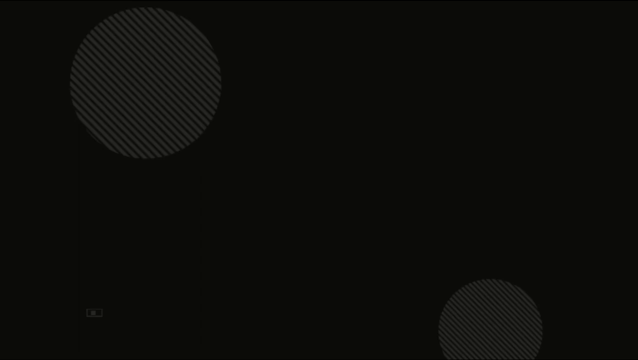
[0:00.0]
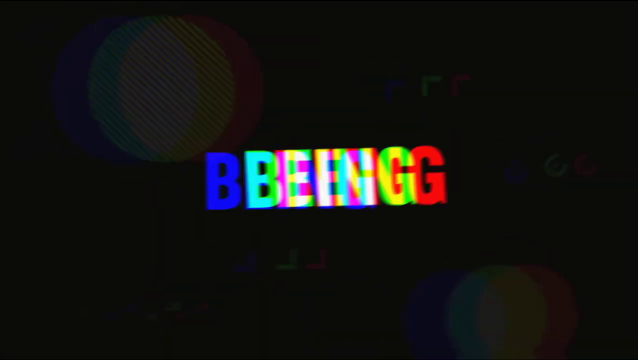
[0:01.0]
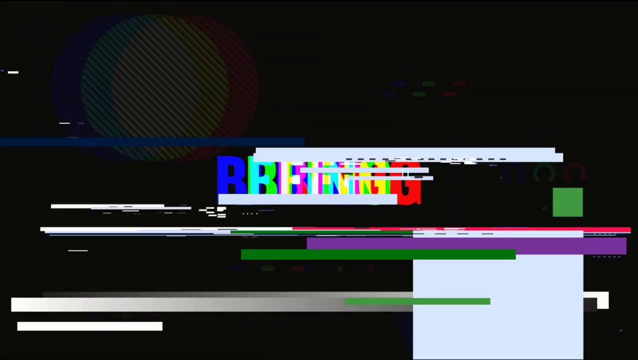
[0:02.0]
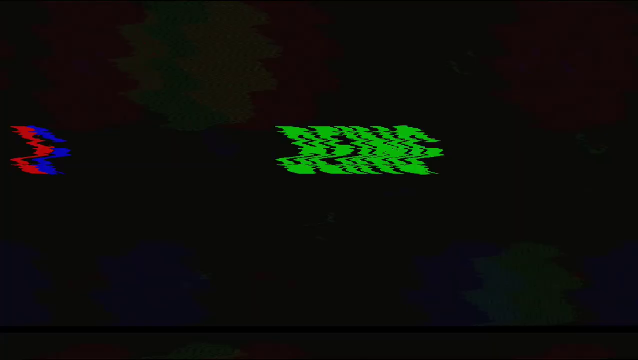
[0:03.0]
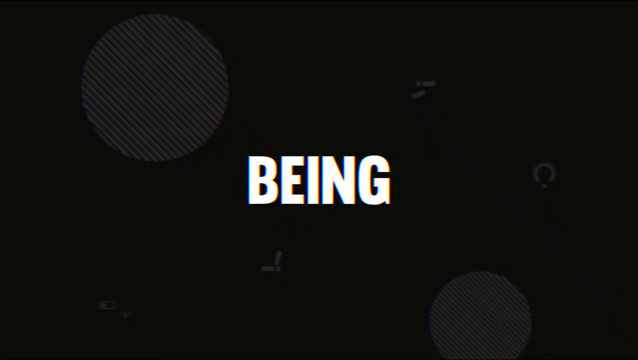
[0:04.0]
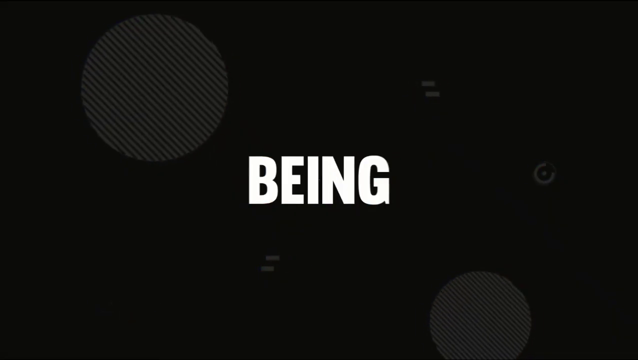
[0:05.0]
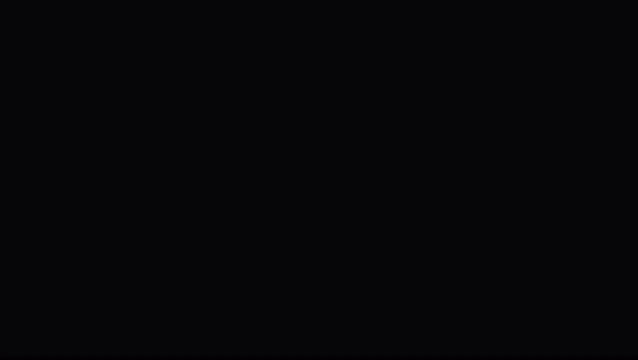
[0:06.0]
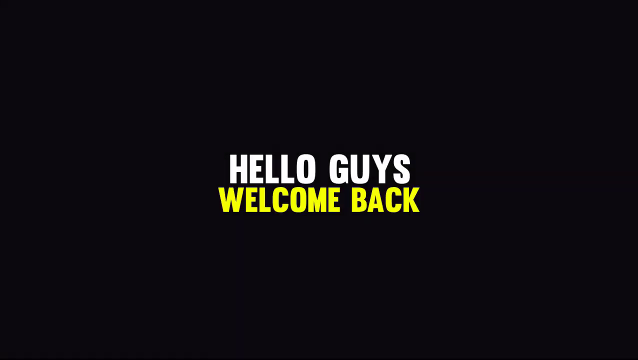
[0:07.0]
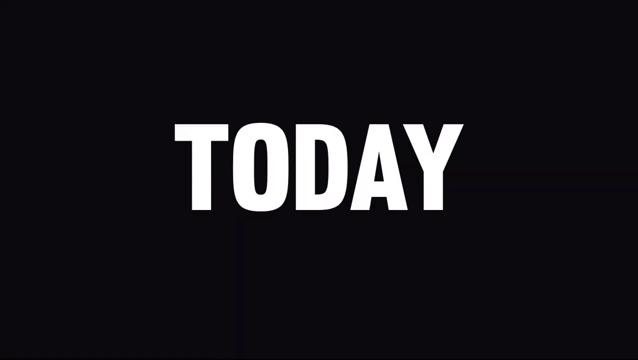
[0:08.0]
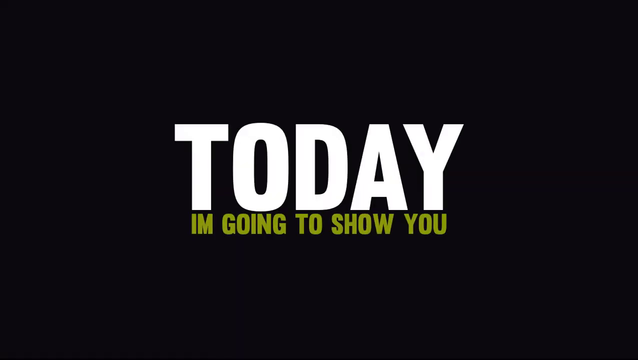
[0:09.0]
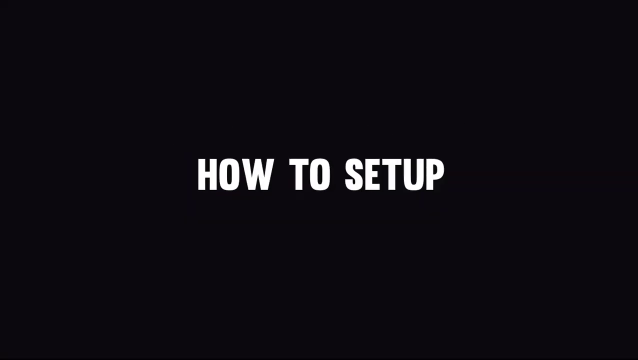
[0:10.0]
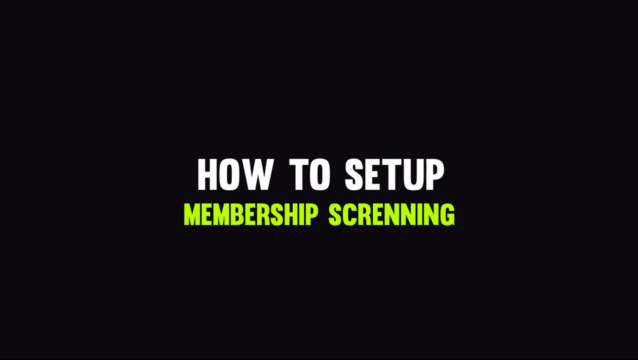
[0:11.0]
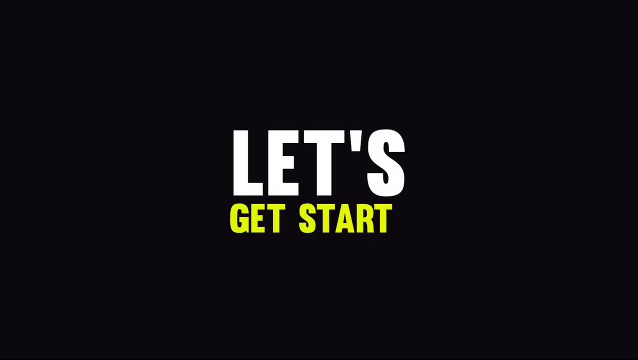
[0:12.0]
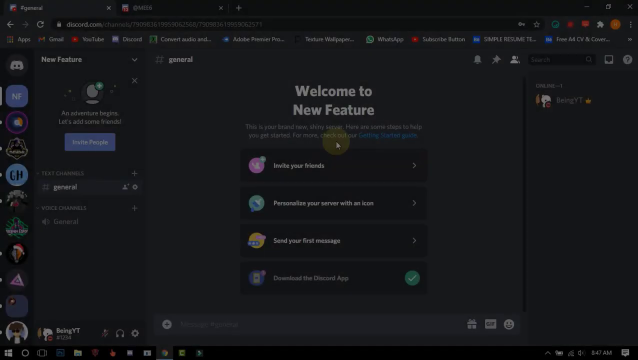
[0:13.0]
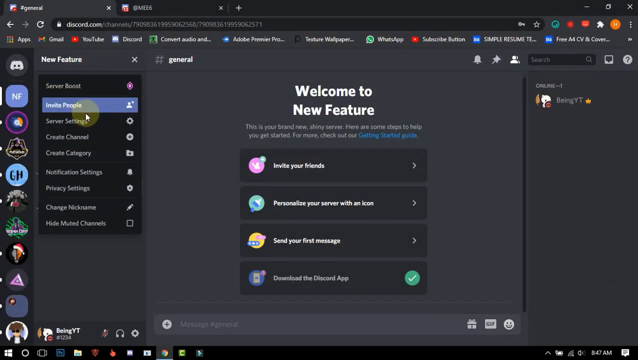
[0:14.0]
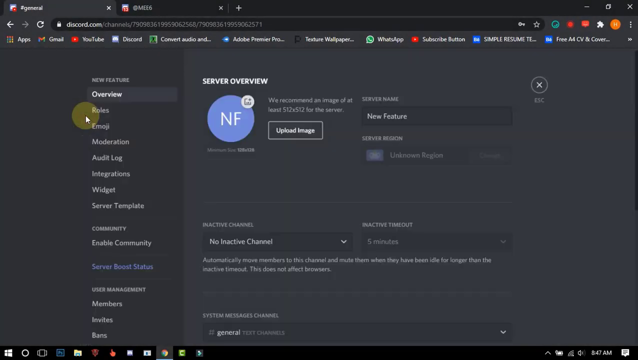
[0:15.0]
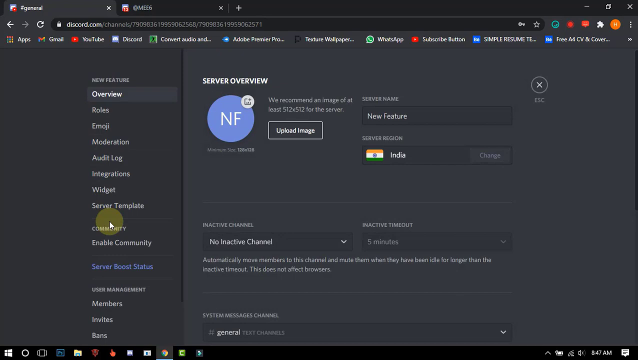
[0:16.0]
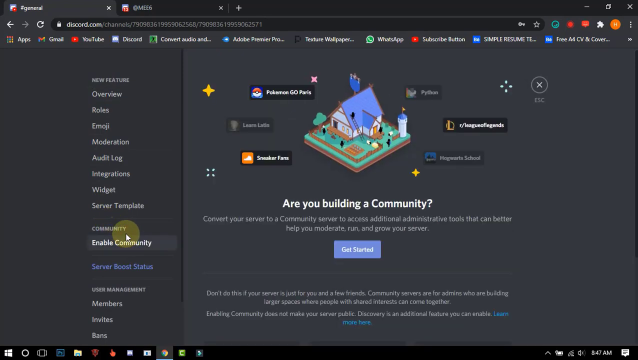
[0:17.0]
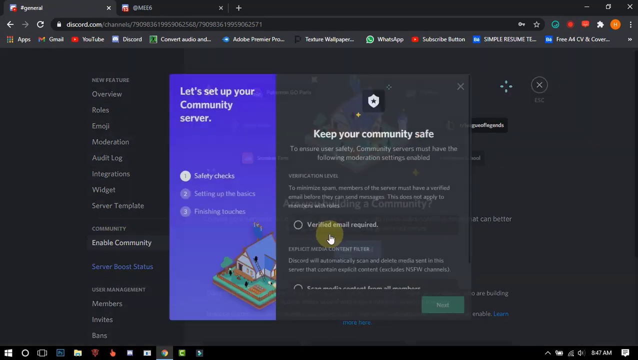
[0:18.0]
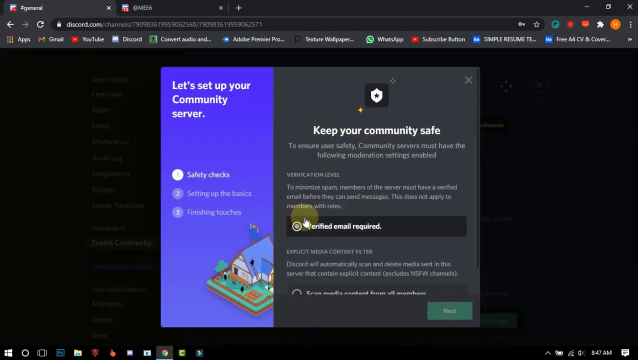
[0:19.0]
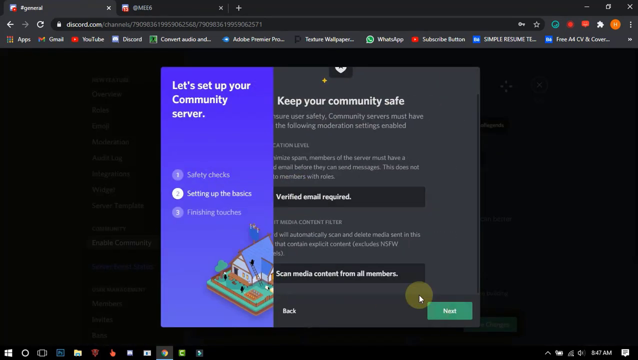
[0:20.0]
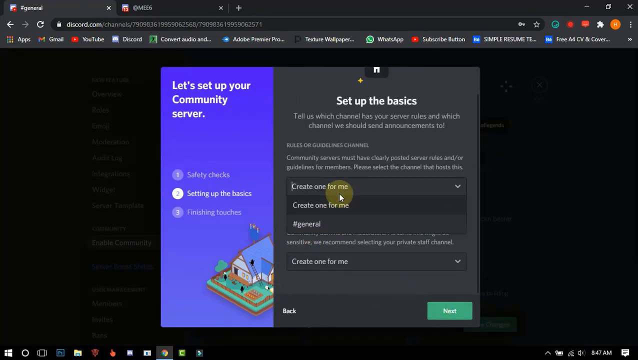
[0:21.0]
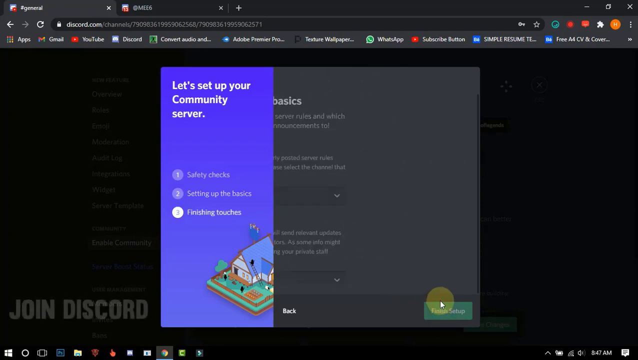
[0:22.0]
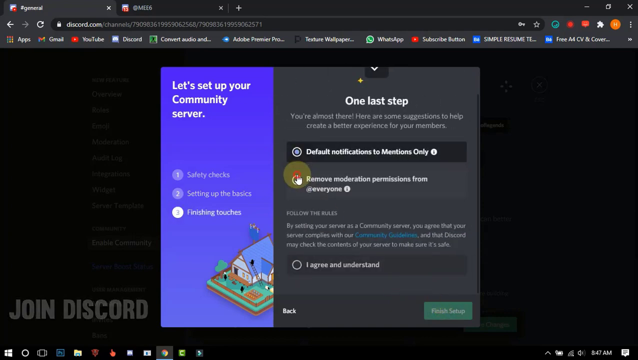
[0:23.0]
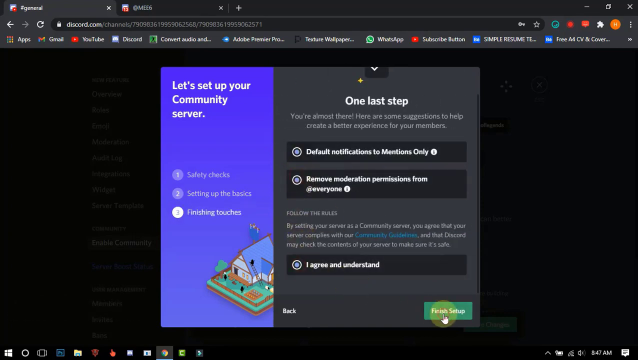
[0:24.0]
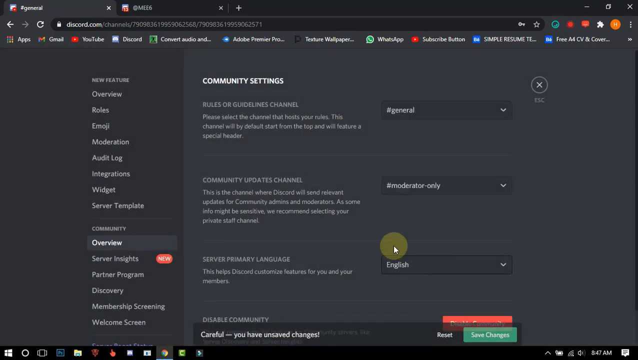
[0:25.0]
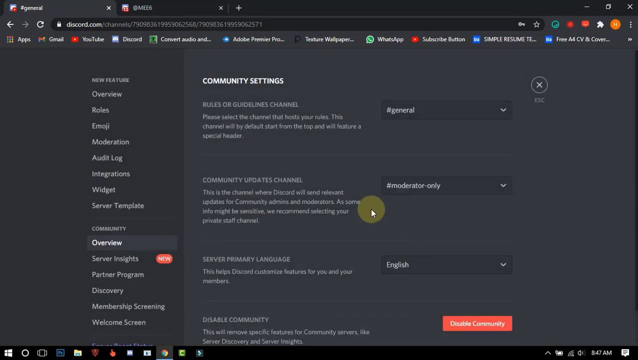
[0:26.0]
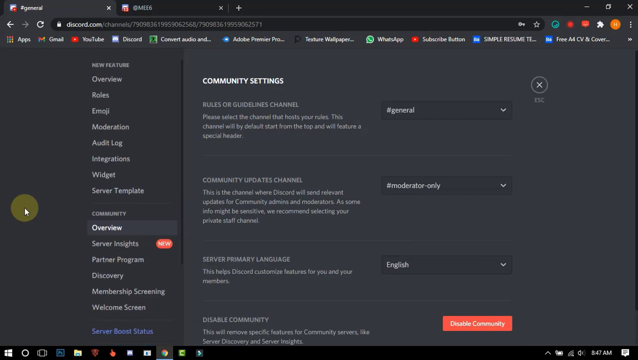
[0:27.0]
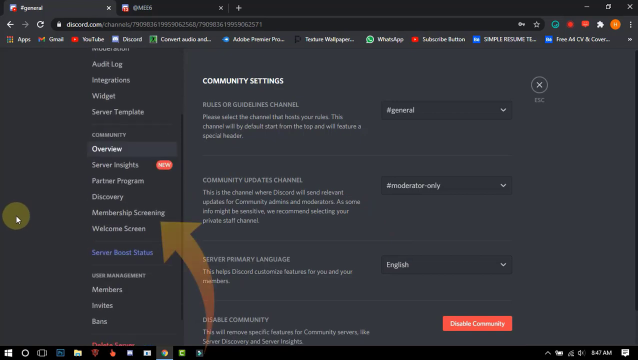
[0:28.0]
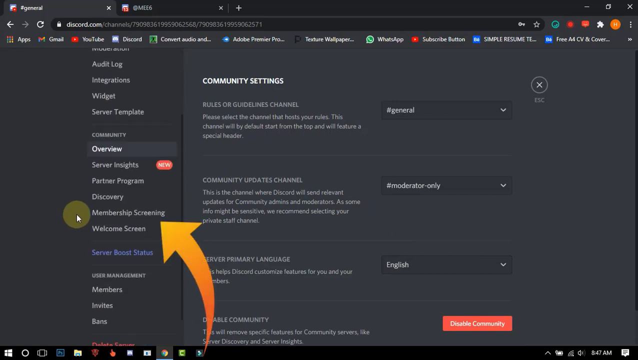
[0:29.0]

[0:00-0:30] The video opens on a plain black screen, then an animation of the word "being" appears. It shakes and moves, separates into different colors, and comes back together, with "being" in the center of the screen and fully white. The animation continues, kind of scratching up the screen as different color blocks appear and shake, and the word separates and moves back together again. "being" fades out while "hello guys" fades in, and underneath it a line reading "welcome back" flashes in and out in yellow font. This disappears and the word "today" appears large in white in the middle of the screen, followed by a subtitle underneath reading "I'm going to show you" in yellow. That disappears, and "HOW TO SET UP" appears in white all-capital font in the center of the screen, with text flashing underneath until "membership screening" appears fully in yellow. This disappears and the words "let's get start" appear: "let's" is larger and in white, and underneath it "get start" is smaller and in yellow. It blinks a couple of times before disappearing. An image of a computer screen fades in, which appears to be a Discord homepage. A menu on the left-hand side reads "new features" and "invite people". The user goes down to server overview and selects it, bringing up a "server overview" menu with the text "We recommend an image of at least 512 by 512." The server name is "new feature" and the server region is India. The user navigates down to enable community and clicks it, then moves to the center of the screen, where a blue clickable button is selected. A pop-up menu titled "keep your community safe" appears; the user selects "verified email required" and "scan media content from all members", then the green next button at the bottom of the menu. The next title reads "set up the basics"; the user opens a drop-down menu and selects "#general", then the green continue button at the bottom. The menu swipes over to a page labeled "one last step", where the user sets default notifications to mentions only, selects remove moderation permissions from at everyone, and selects "I agree and understand". The user then selects the green button at the bottom of the pop-up that reads "finish settings". Scrolling down the left-side menu, an orange arrow appears pointing to an option reading "Membership Screening", and the user selects it with the mouse.